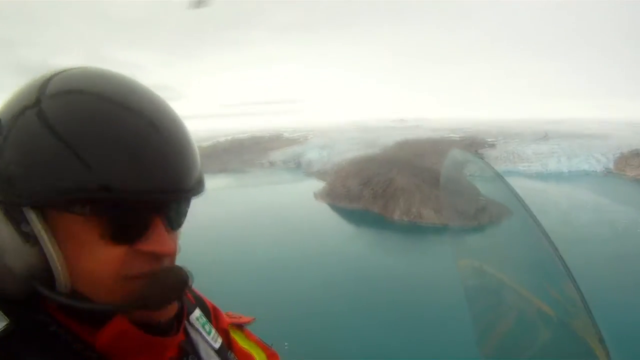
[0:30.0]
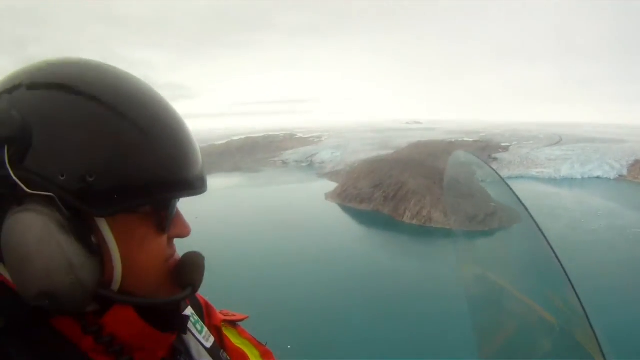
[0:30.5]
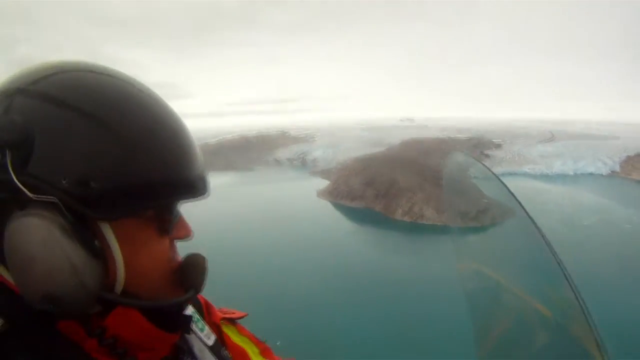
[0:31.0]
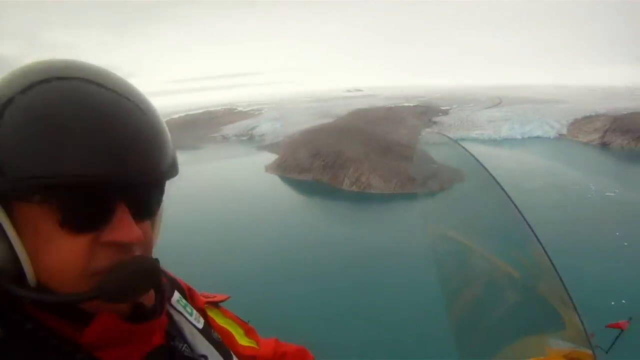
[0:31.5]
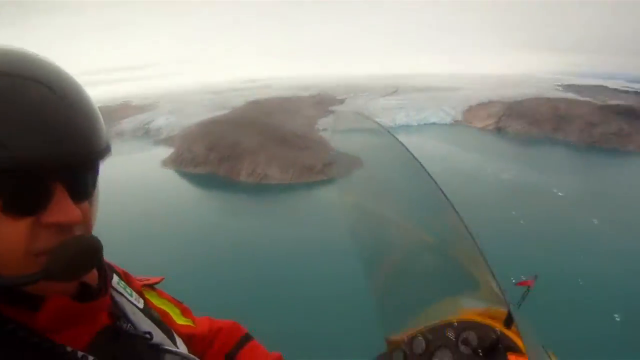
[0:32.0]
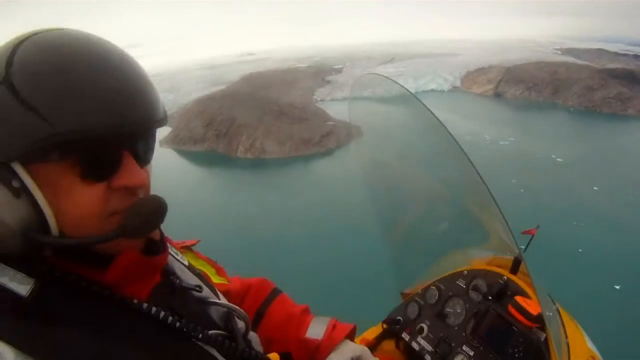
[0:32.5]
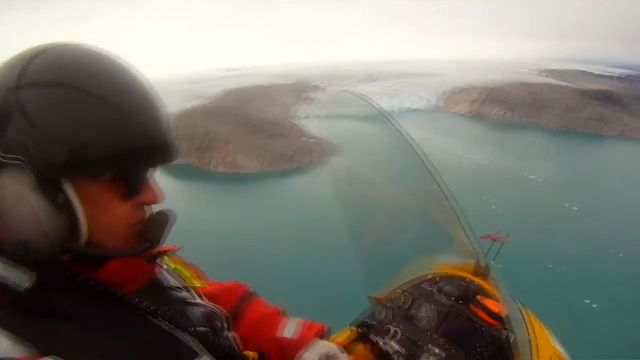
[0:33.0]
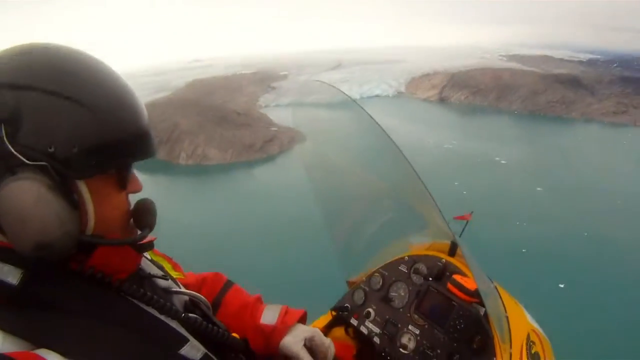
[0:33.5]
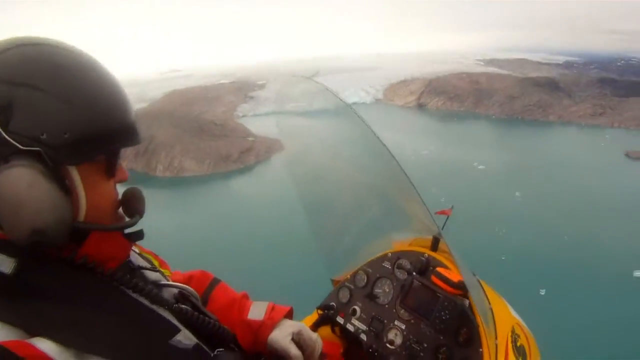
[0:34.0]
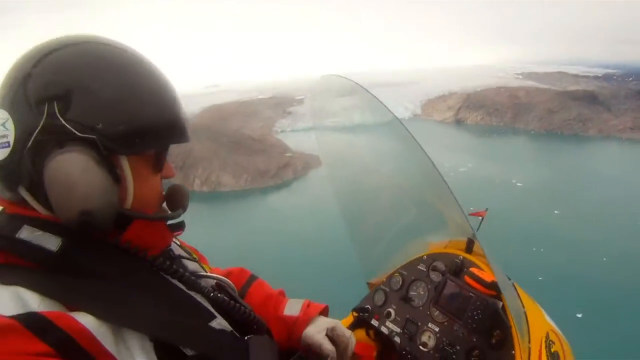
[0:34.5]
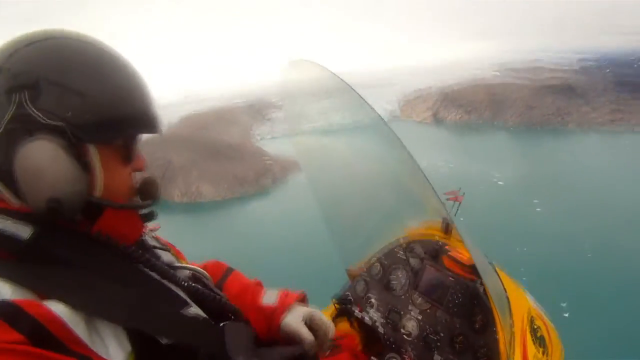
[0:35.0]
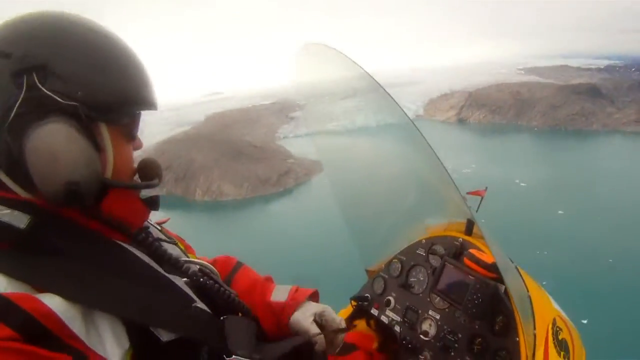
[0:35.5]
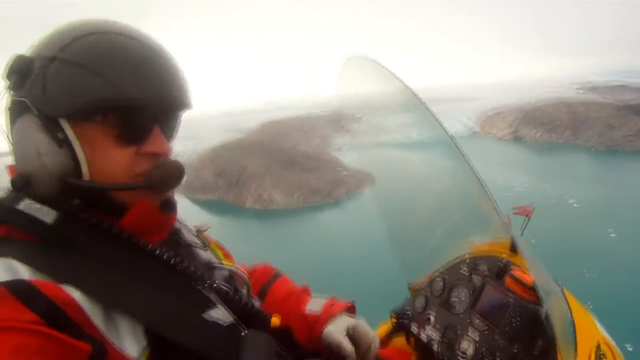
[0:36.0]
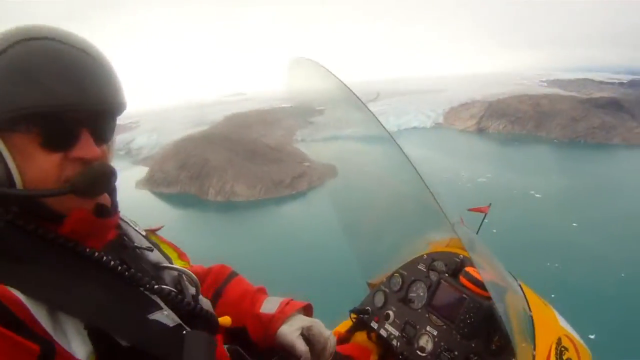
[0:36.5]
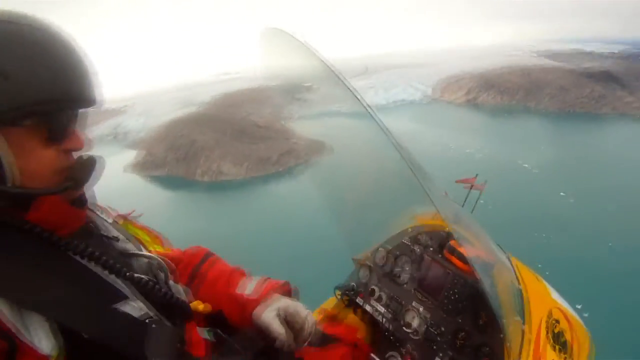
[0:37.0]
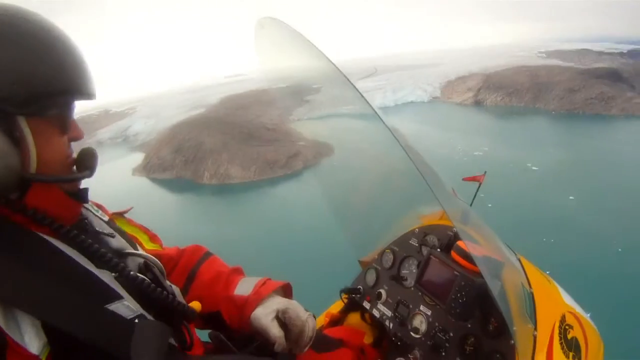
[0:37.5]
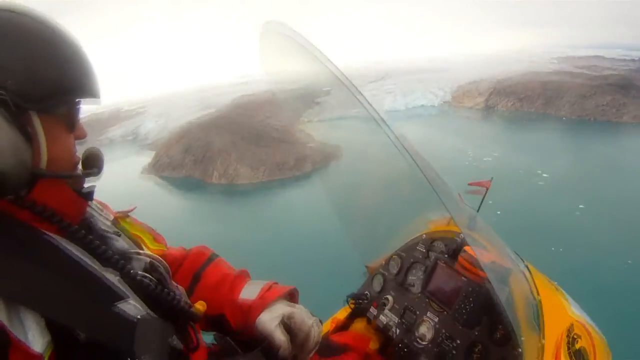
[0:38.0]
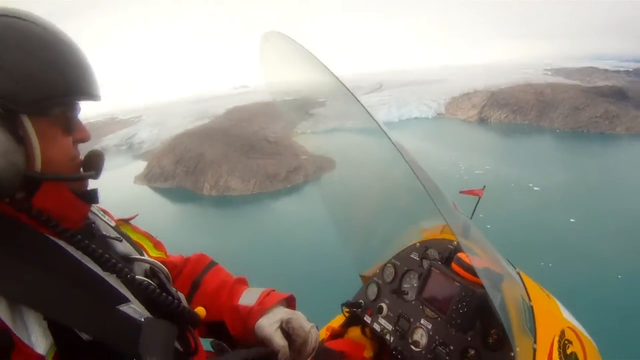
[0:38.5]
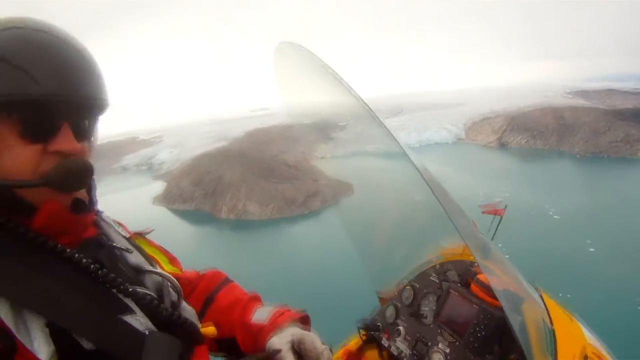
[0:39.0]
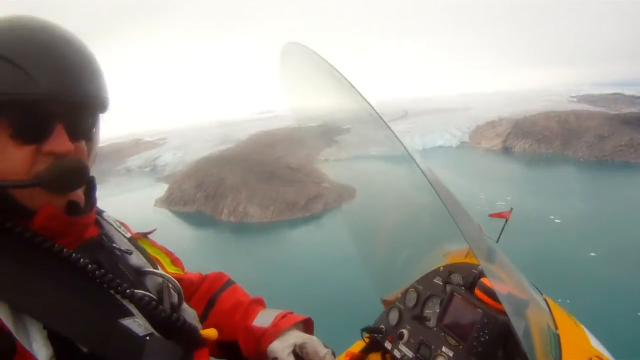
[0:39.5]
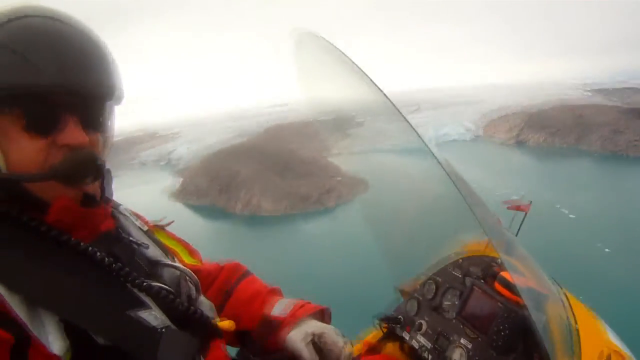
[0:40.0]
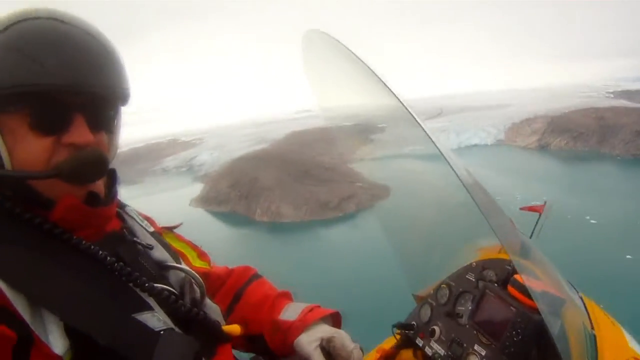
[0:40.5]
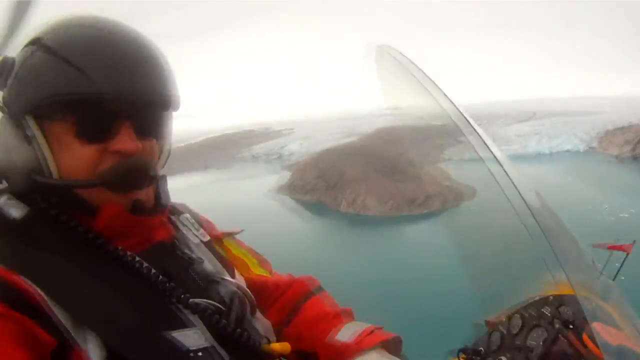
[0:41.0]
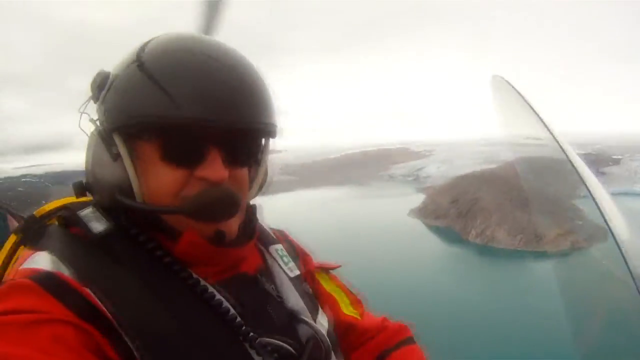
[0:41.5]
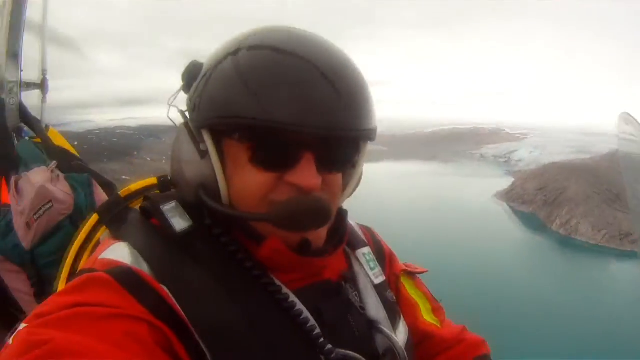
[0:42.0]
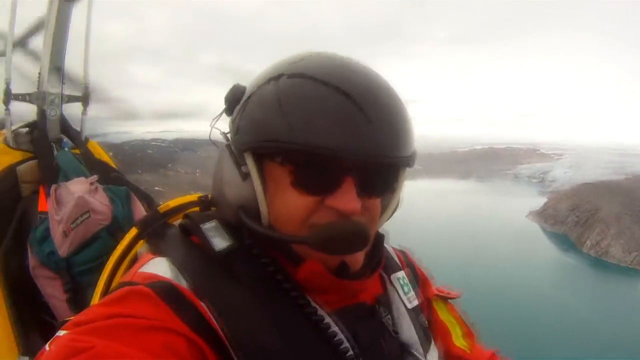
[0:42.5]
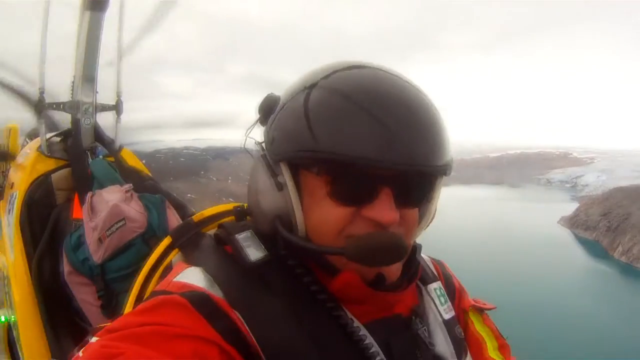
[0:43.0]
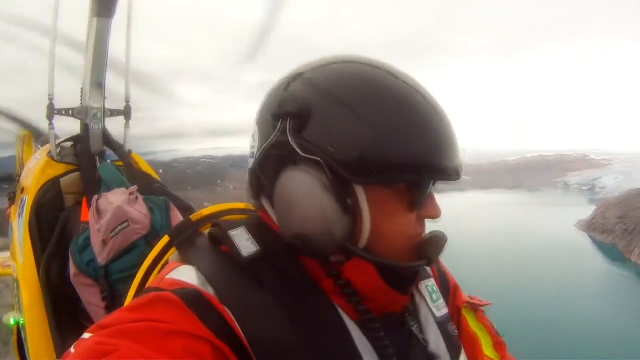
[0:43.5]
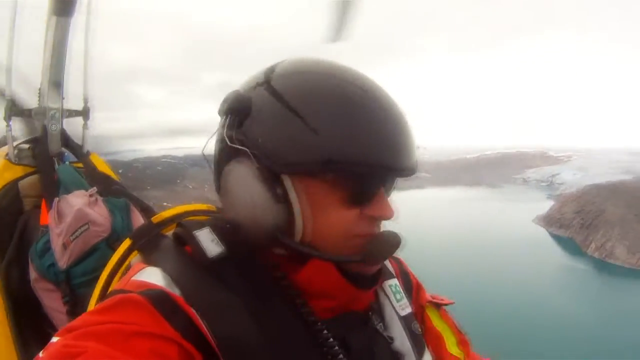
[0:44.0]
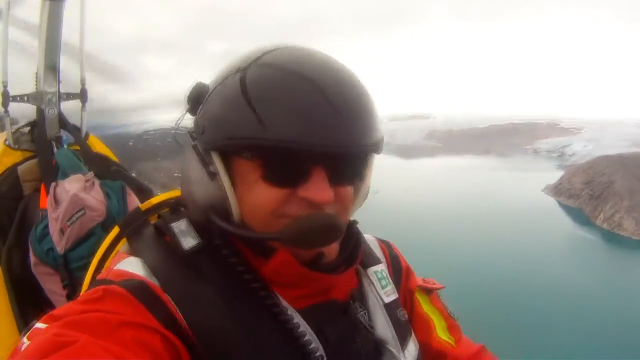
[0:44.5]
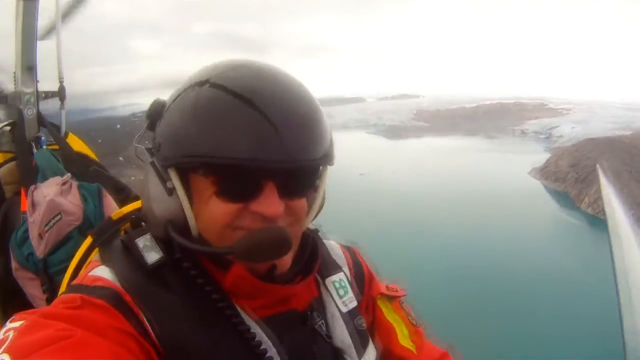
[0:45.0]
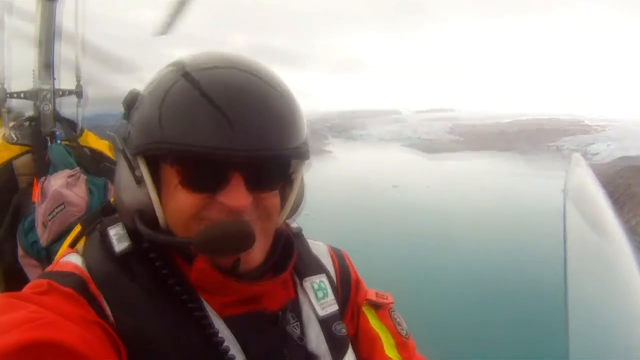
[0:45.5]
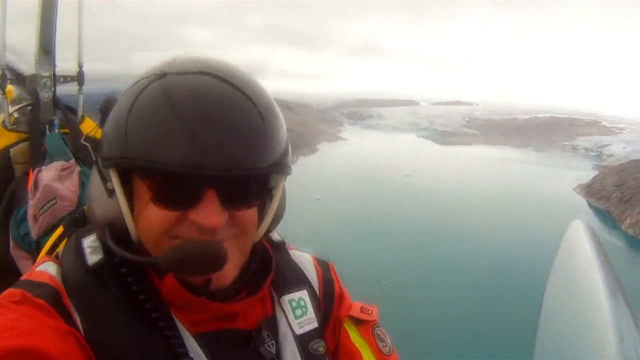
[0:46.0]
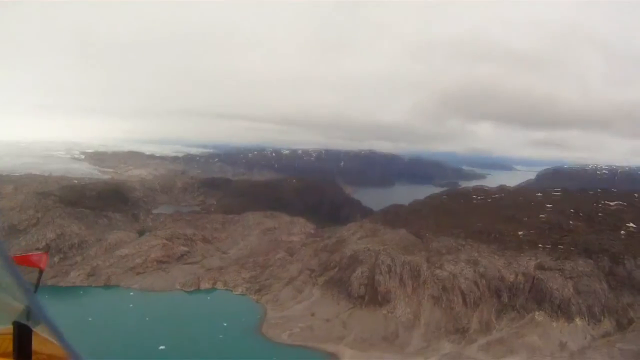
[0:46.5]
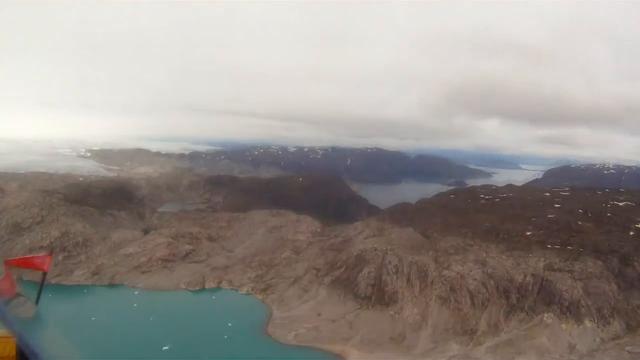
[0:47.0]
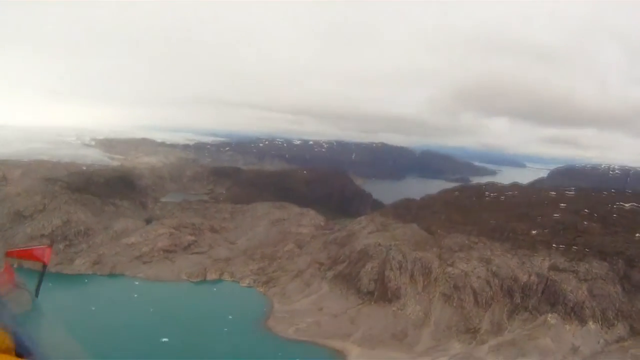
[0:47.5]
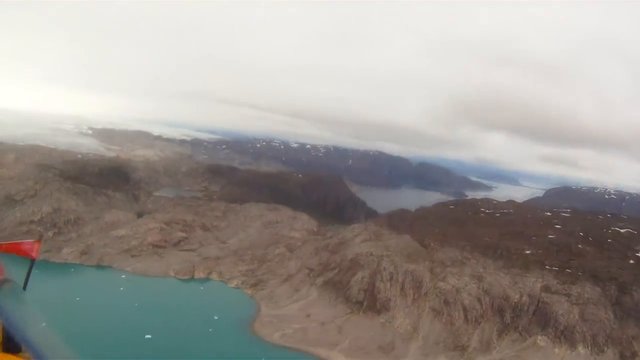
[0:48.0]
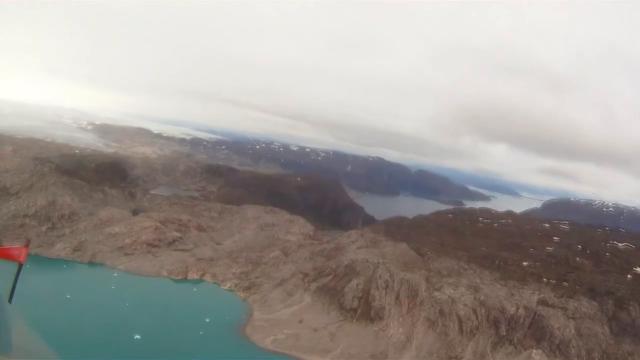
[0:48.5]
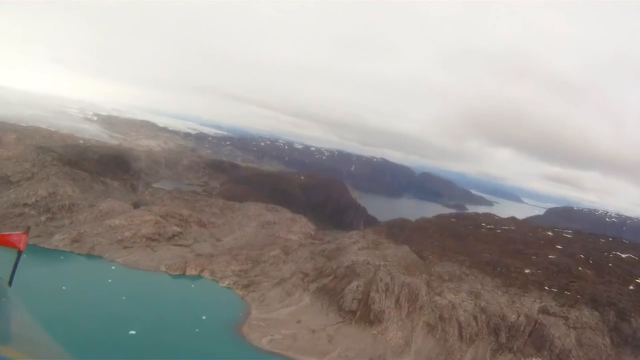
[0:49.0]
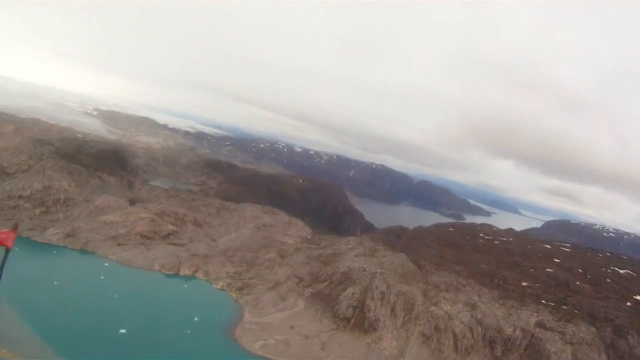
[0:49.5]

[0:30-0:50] A close-up view shows a man flying in what seems to be a makeshift two-person helicopter. He wears a black helmet, sunglasses, and the red flight suit that pilots wear, and apparently a black parachute. He is flying over what looks like an island, with bluish-green water behind him, possibly some glaciers, and some mountains. Part of his helicopter is visible, and it is yellow. He is just looking, and the propellers at the back are visible. His gear is in his backseat, including what looks like an orange and pink backpack. There is one big propeller right above his head and another propeller on the back of the makeshift helicopter. Another view follows, possibly from the front or side, showing pretty bare mountains with no vegetation and no trees. In the foreground is another island that seems to have trees, along with a bunch of clouds, and water all around, so he appears to be close to a shoreline or perhaps just around the island.